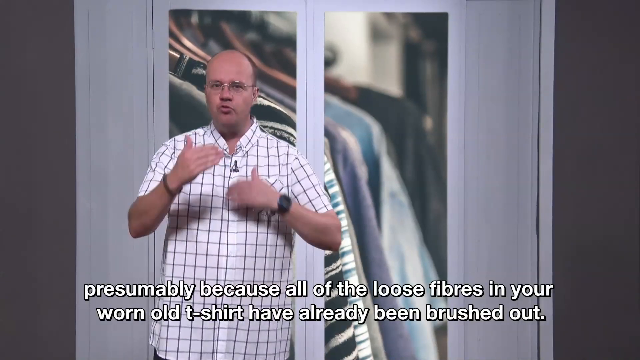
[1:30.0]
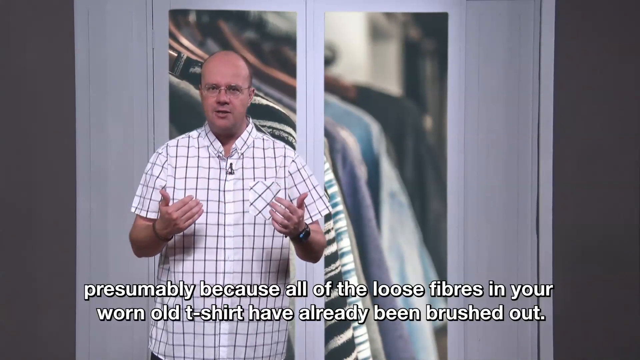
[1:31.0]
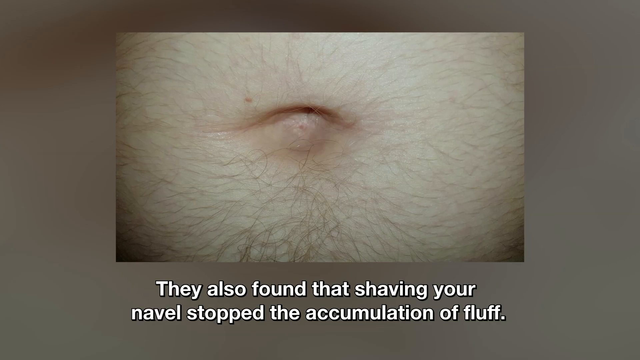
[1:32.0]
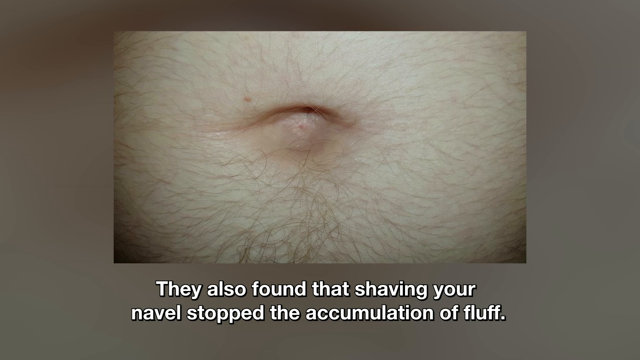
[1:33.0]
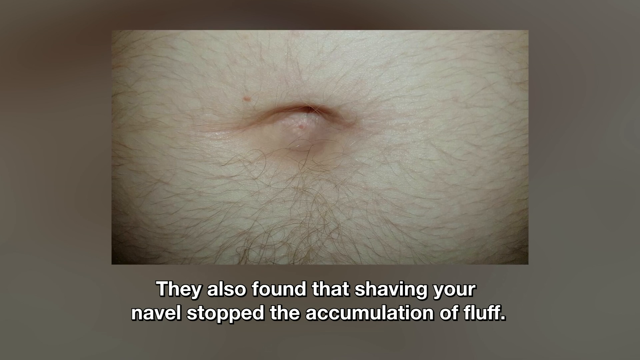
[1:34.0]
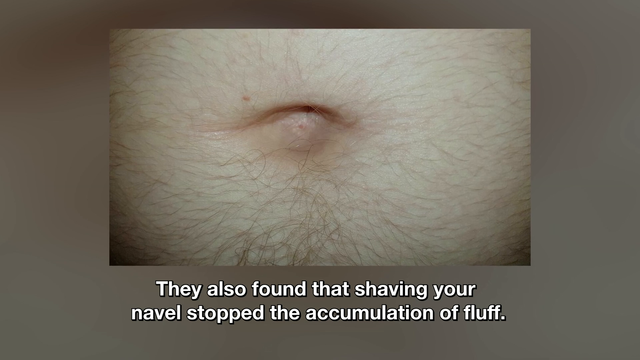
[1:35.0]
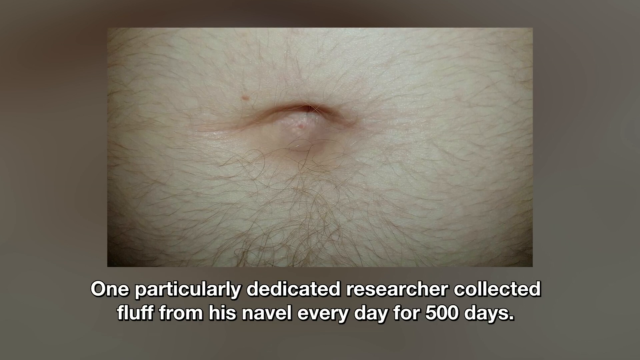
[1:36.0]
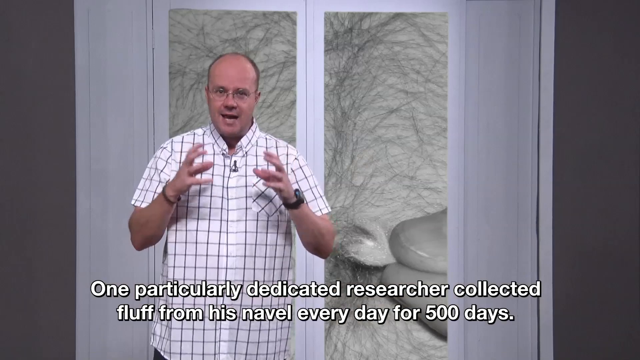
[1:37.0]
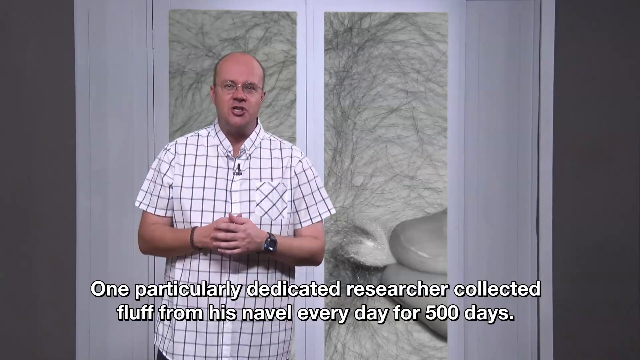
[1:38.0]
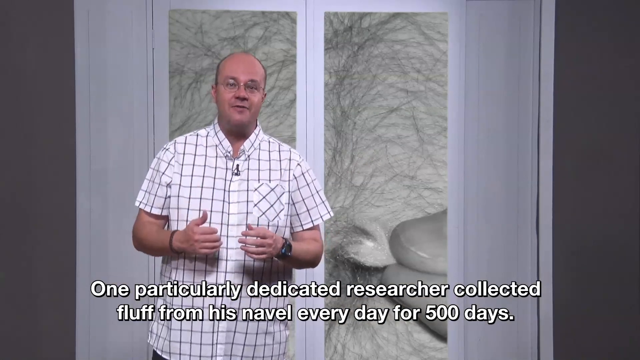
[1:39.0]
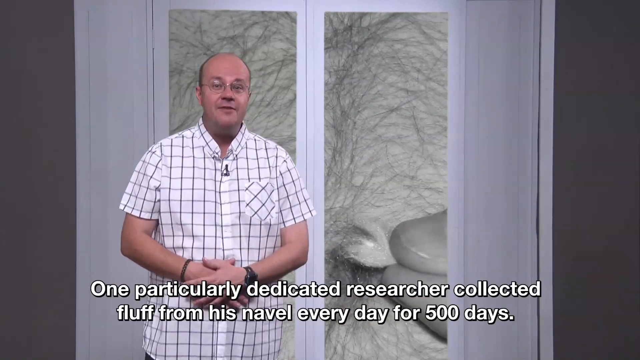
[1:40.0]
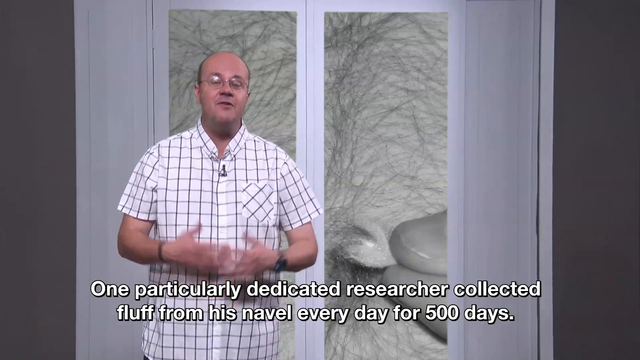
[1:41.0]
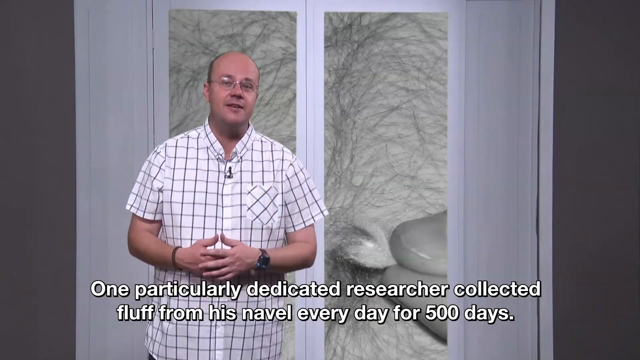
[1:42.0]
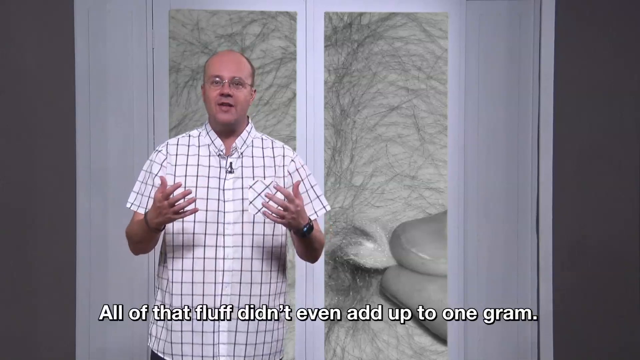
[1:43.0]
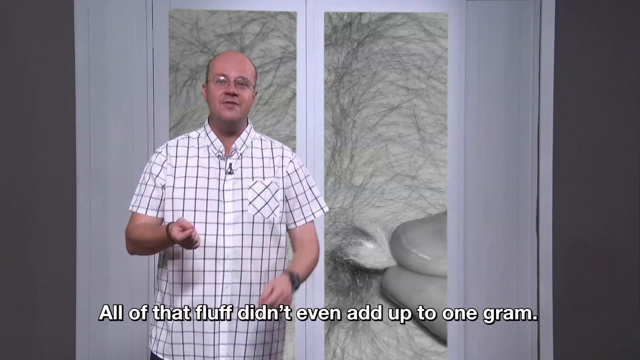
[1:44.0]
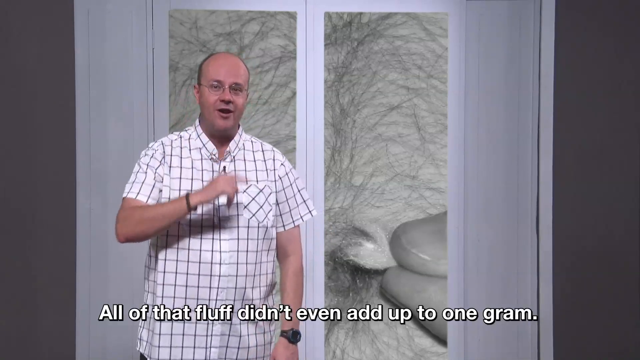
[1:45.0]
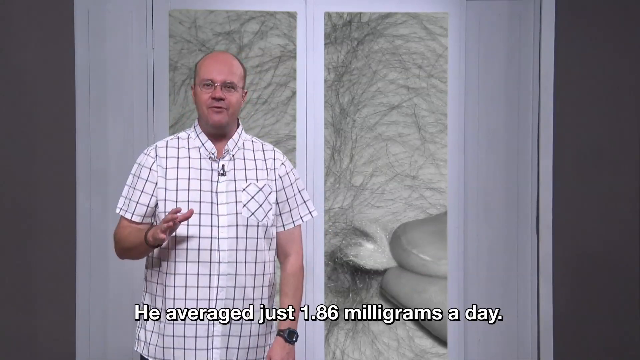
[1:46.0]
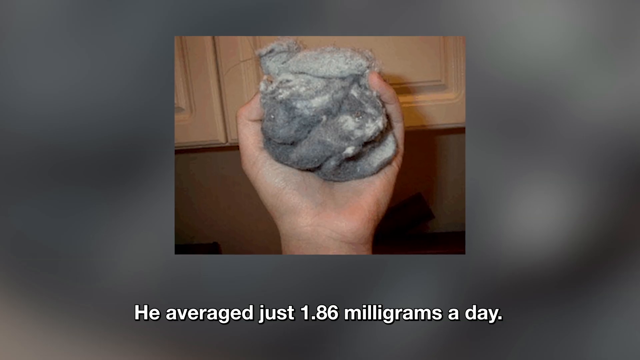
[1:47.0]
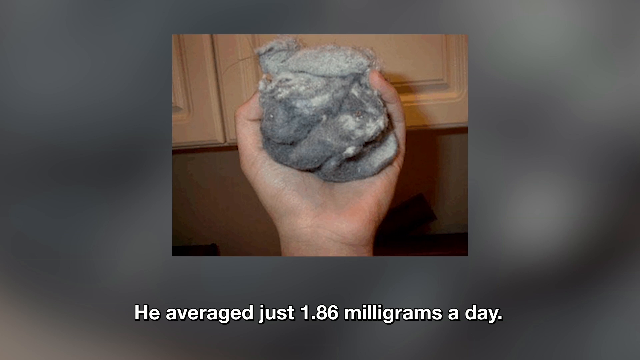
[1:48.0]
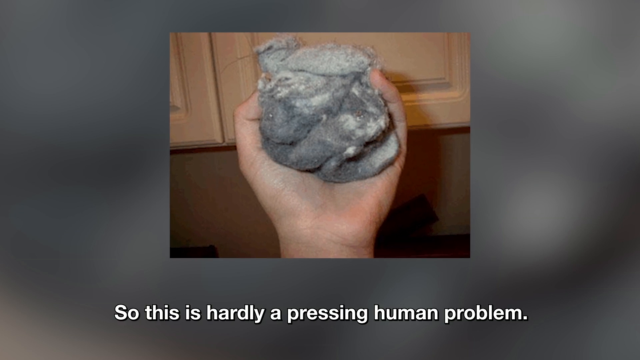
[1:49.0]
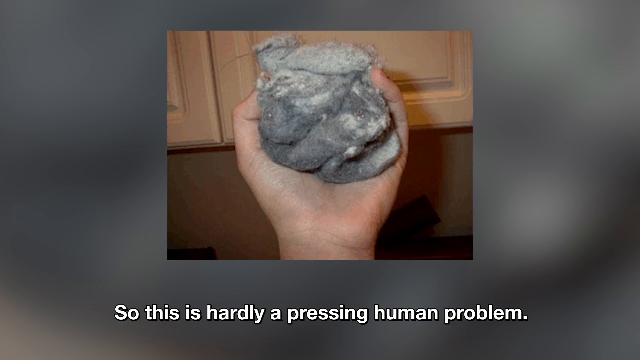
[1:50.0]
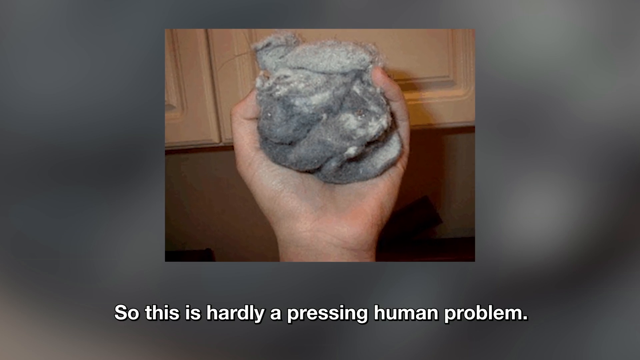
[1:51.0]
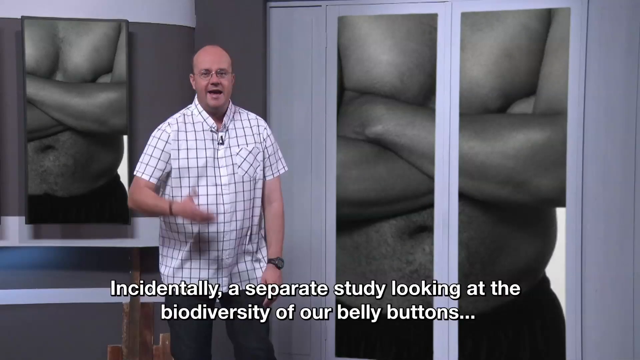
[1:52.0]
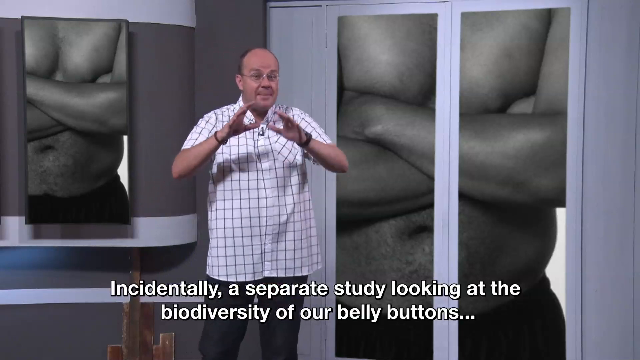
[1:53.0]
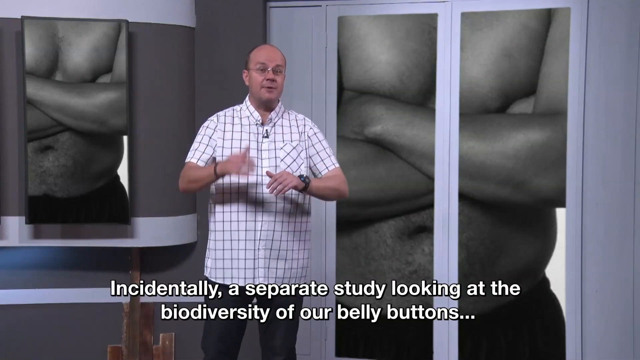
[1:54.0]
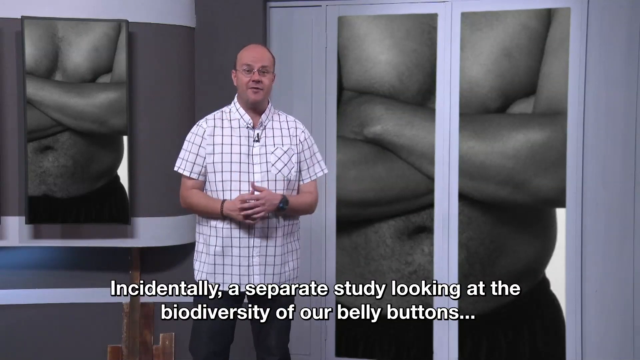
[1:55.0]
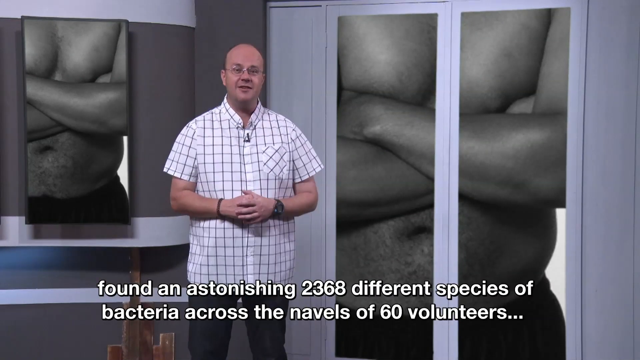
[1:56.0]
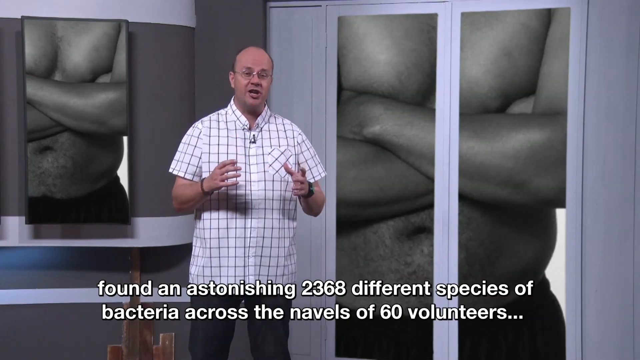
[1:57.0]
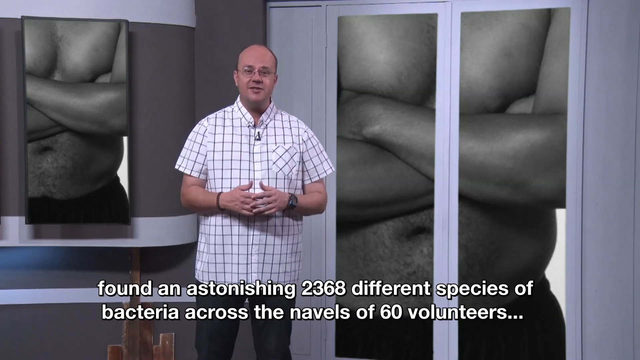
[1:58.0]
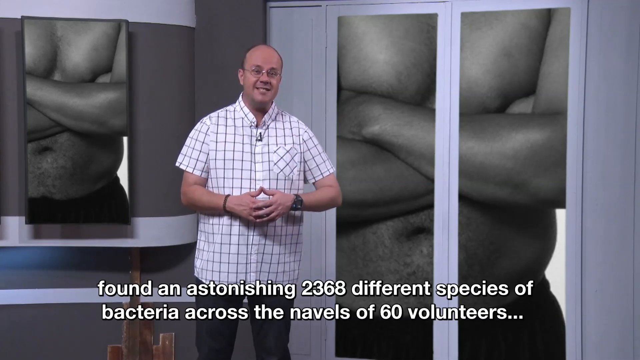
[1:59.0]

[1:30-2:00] The video about belly button lint continues, stating that shaving your navel stopped the accumulation of fluff, and that one particularly dedicated researcher collected fluff from his navel every day for 500 days, all of which didn't even add up to one grain, averaging just 1.86 milligrams a day. A picture shows a hand holding a bunch of fluff. Text then reads: "so this is hardly a pressing human problem. Incidentally, a separate study looking at the biodiversity of our bellybuttons found an astonishing 2,368 different species of bacteria across the navels of 60 volunteers."